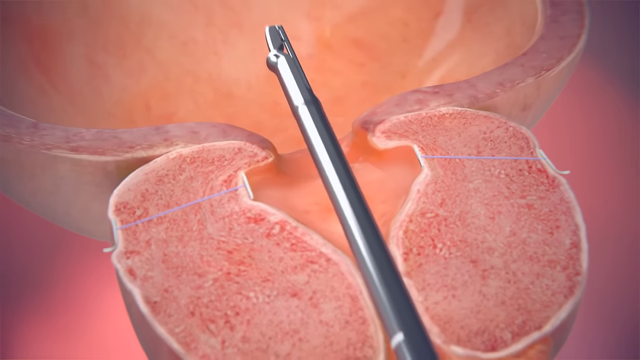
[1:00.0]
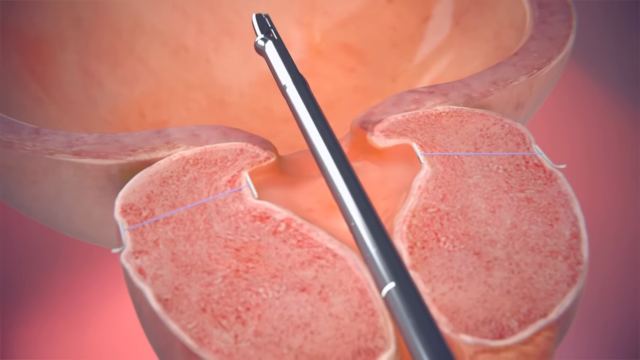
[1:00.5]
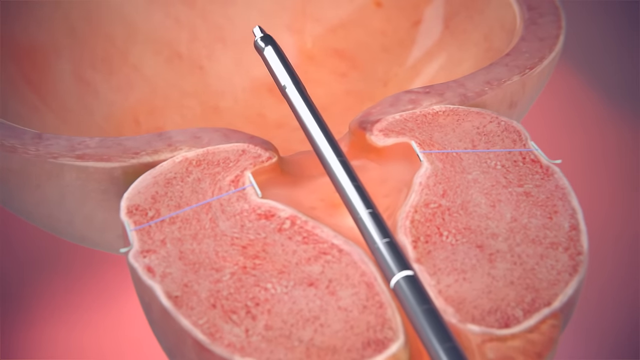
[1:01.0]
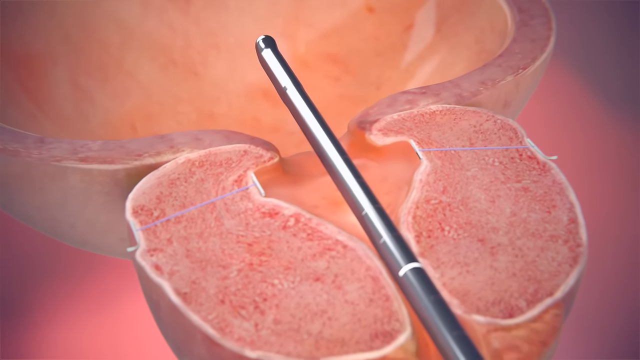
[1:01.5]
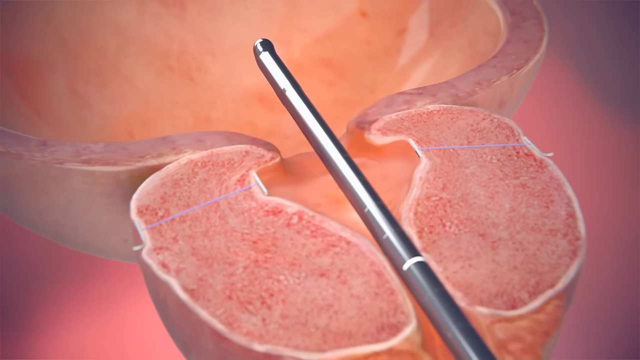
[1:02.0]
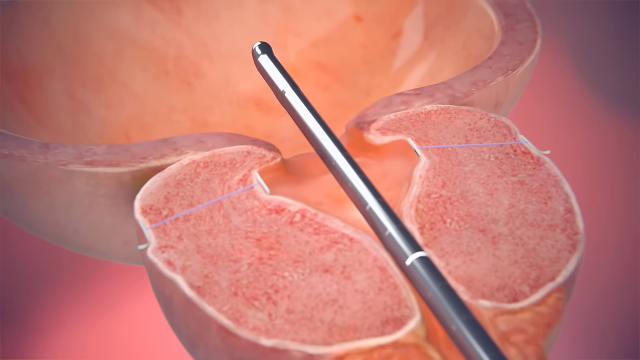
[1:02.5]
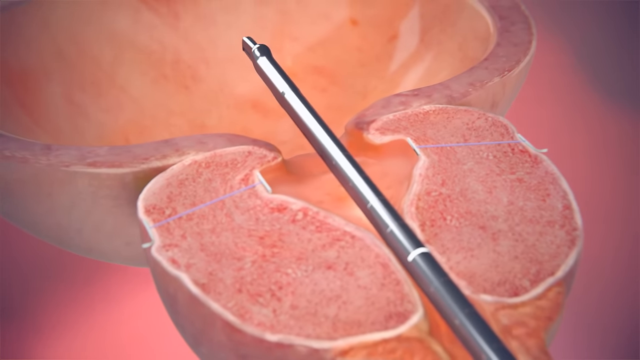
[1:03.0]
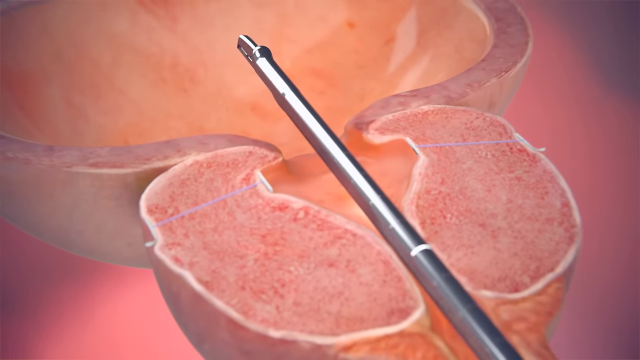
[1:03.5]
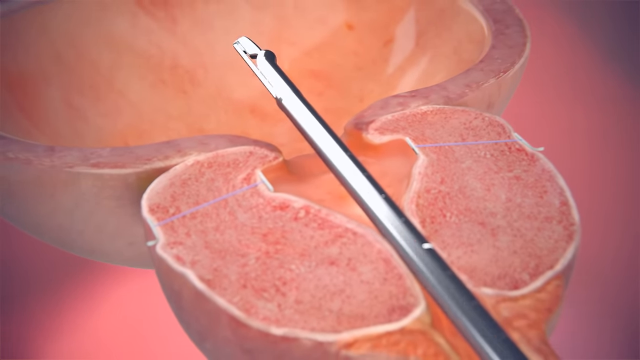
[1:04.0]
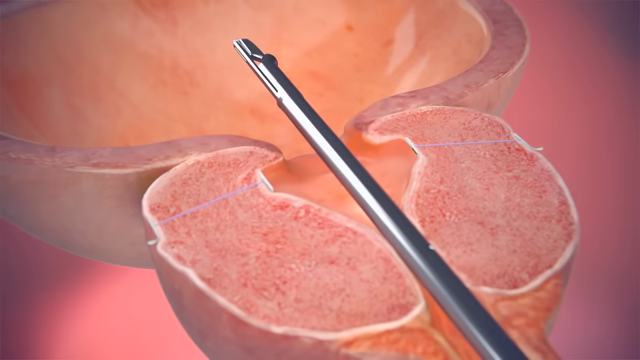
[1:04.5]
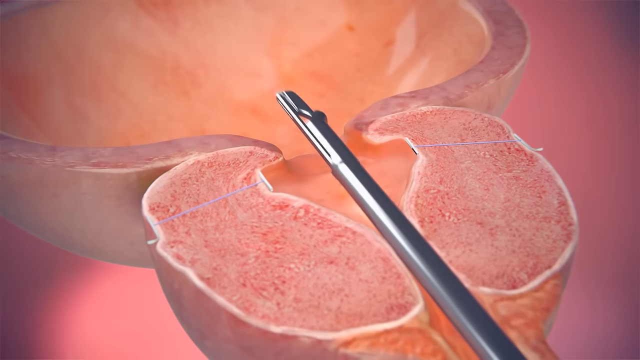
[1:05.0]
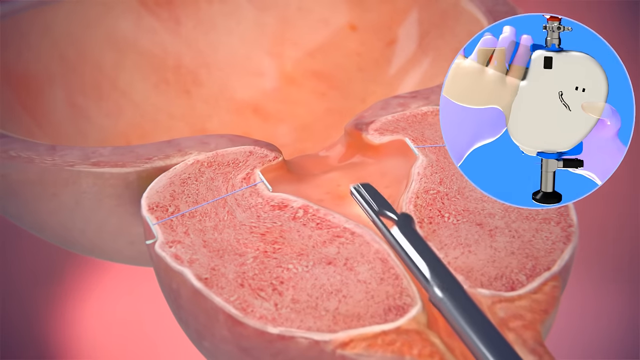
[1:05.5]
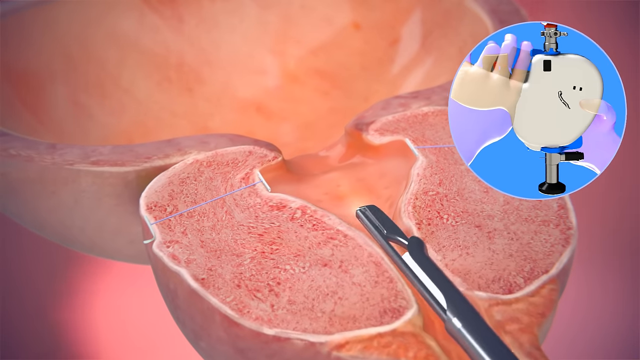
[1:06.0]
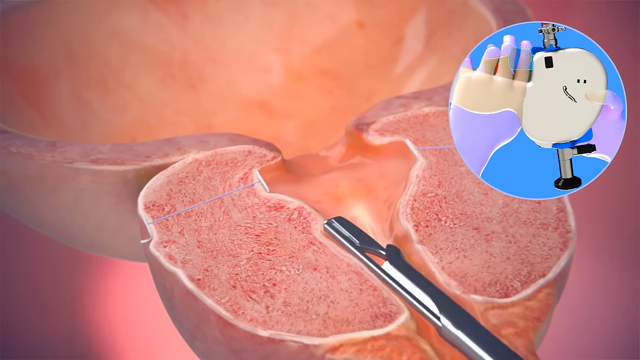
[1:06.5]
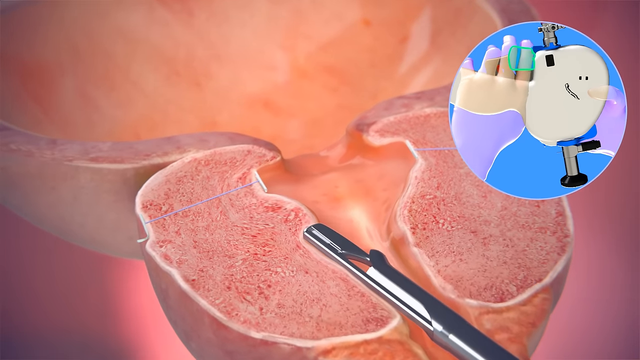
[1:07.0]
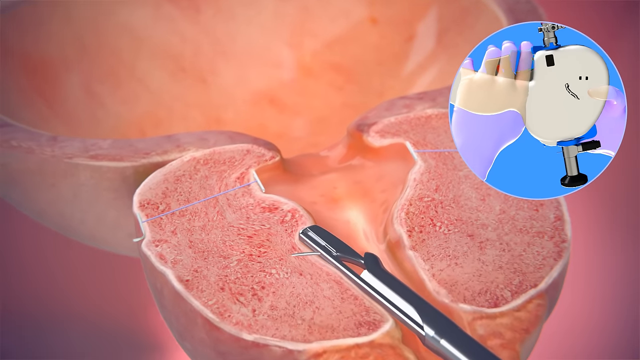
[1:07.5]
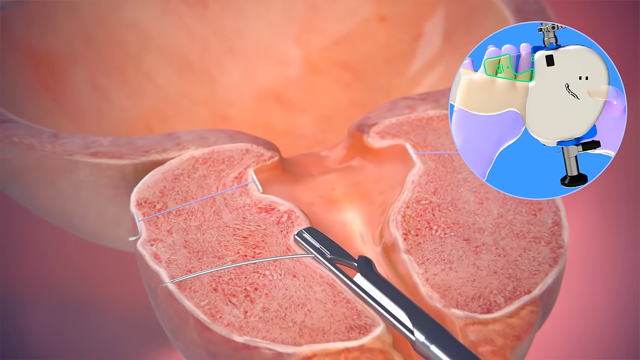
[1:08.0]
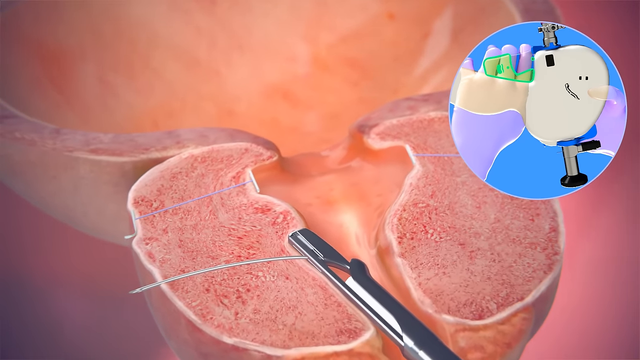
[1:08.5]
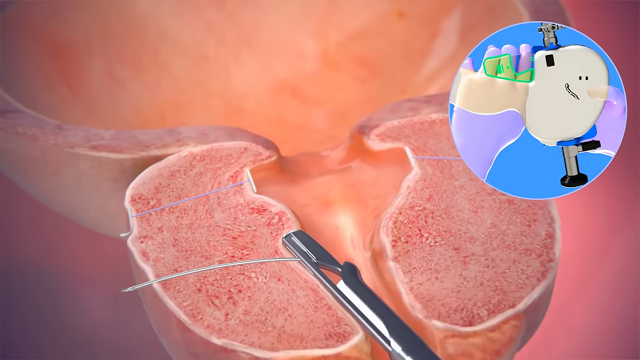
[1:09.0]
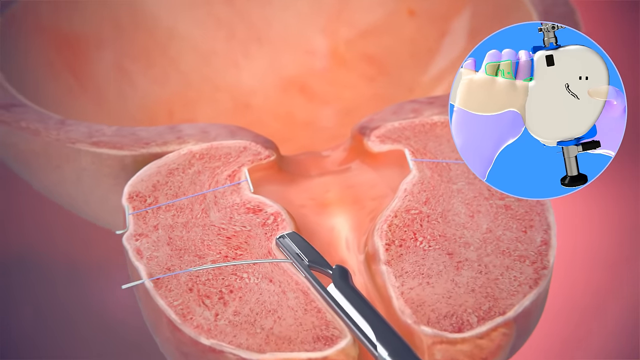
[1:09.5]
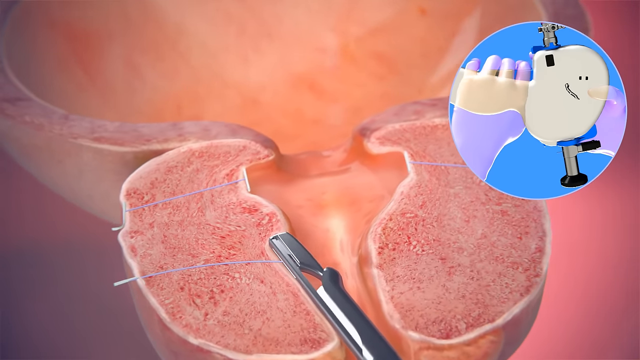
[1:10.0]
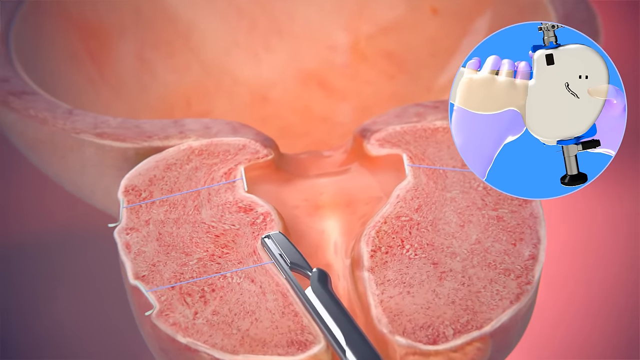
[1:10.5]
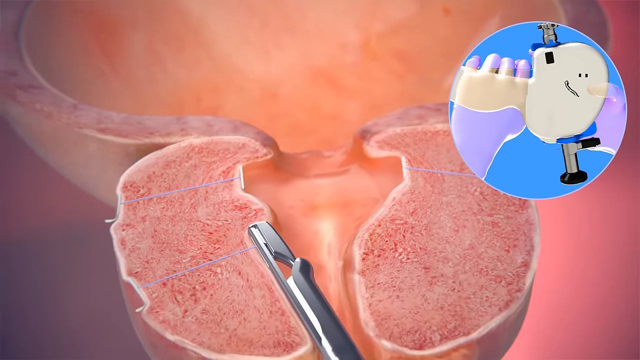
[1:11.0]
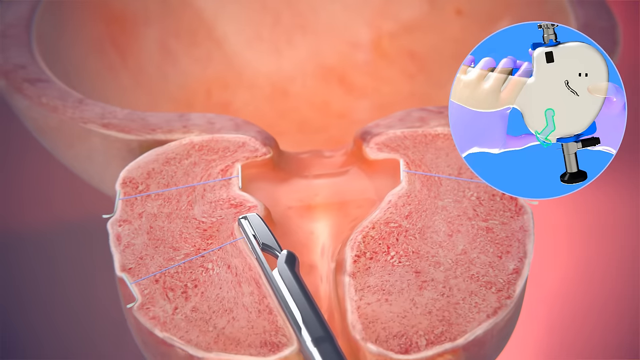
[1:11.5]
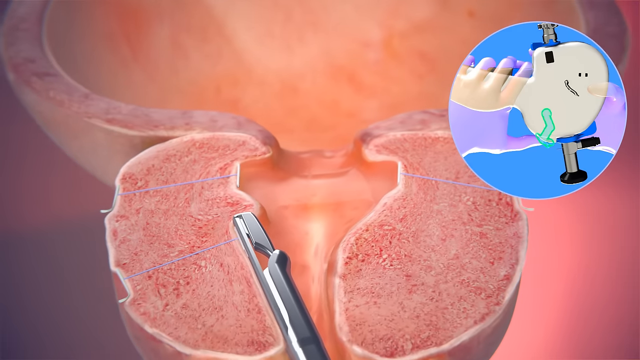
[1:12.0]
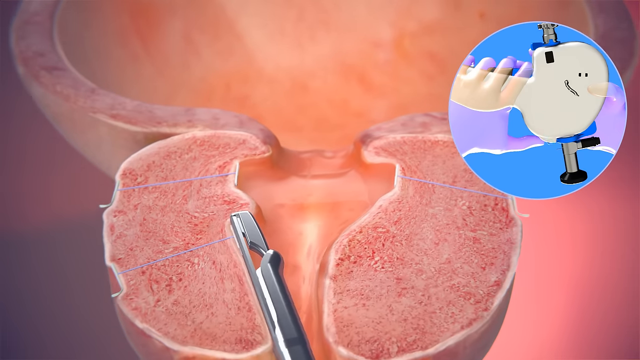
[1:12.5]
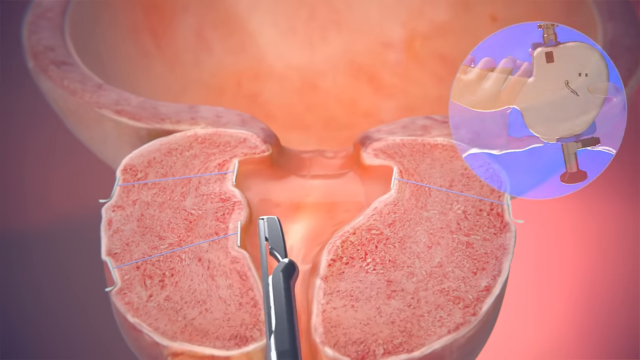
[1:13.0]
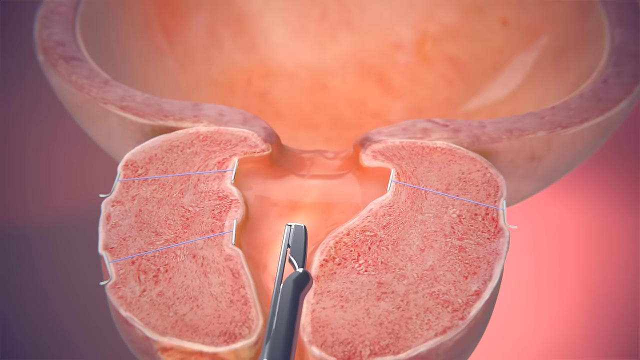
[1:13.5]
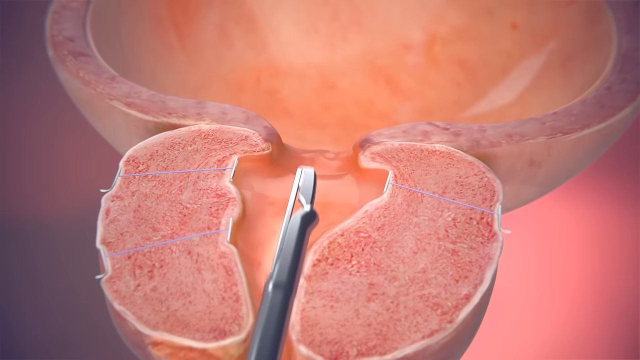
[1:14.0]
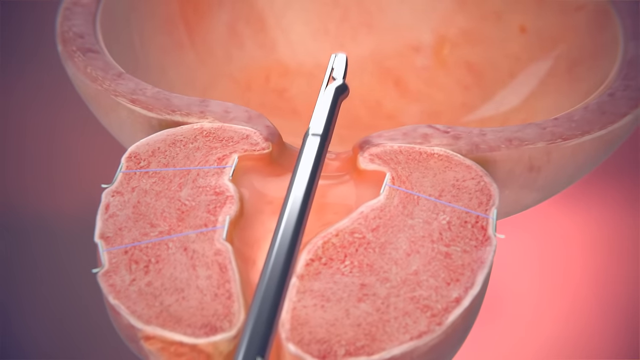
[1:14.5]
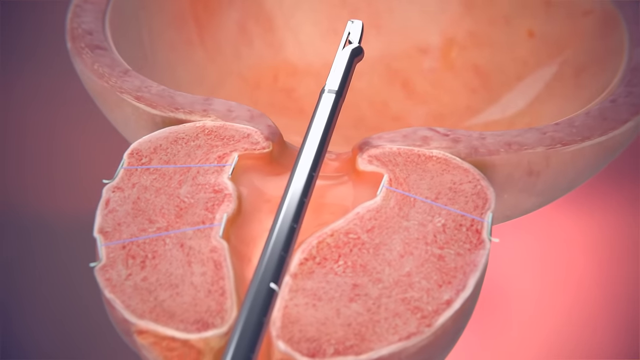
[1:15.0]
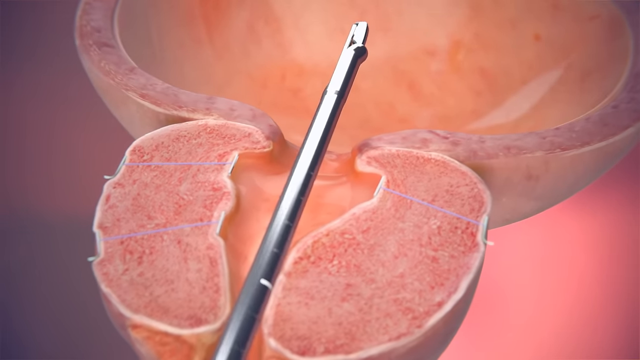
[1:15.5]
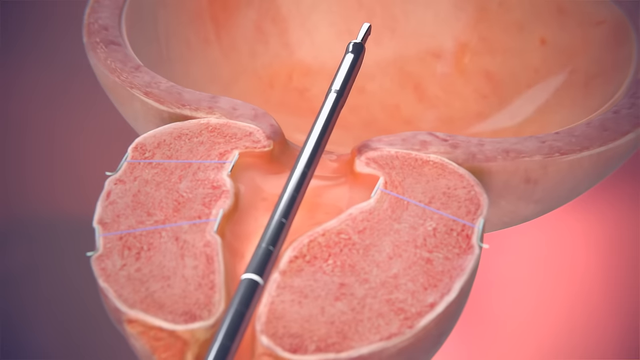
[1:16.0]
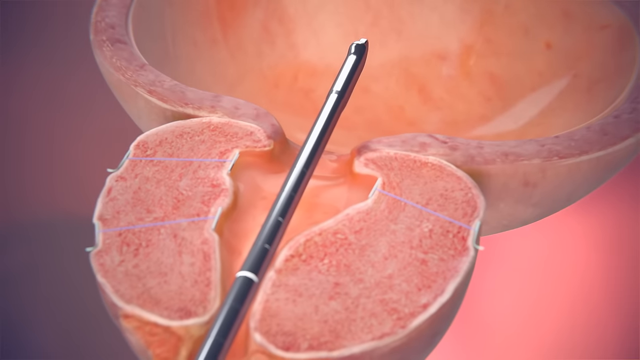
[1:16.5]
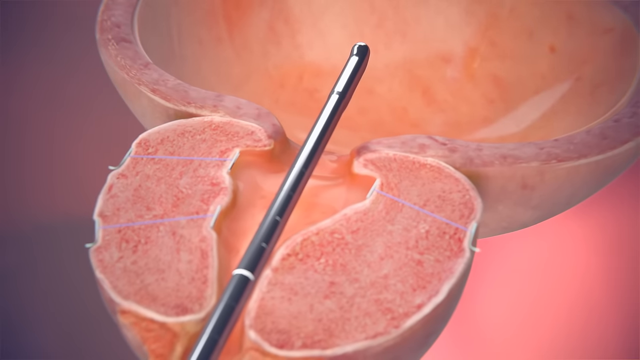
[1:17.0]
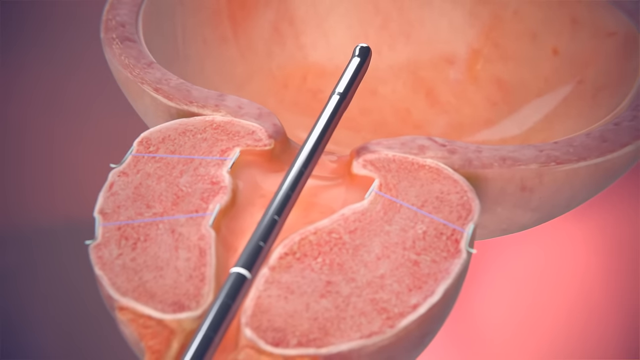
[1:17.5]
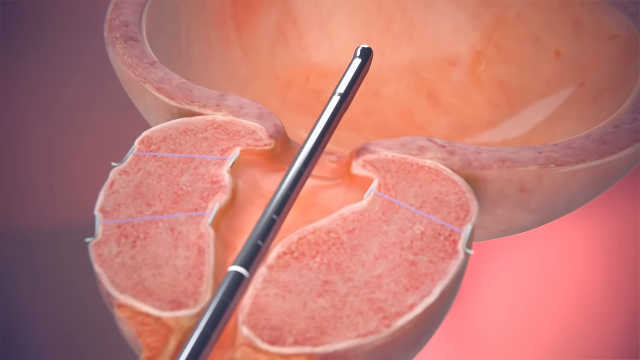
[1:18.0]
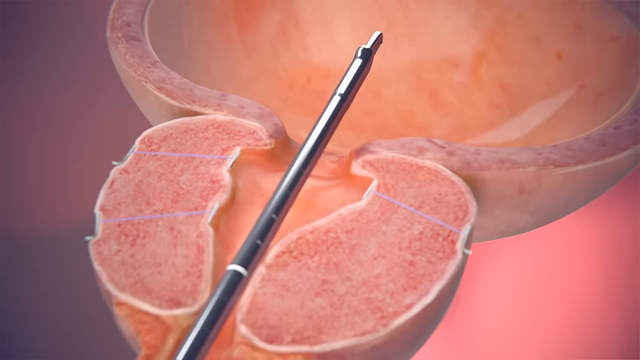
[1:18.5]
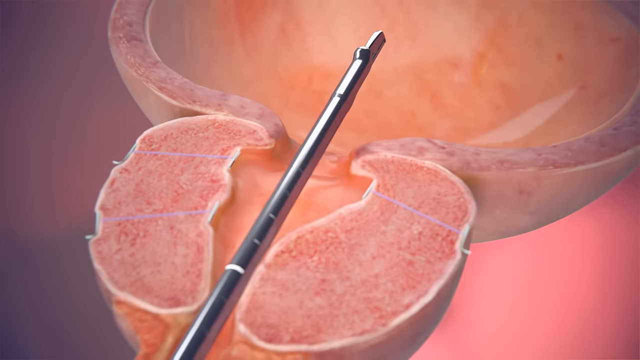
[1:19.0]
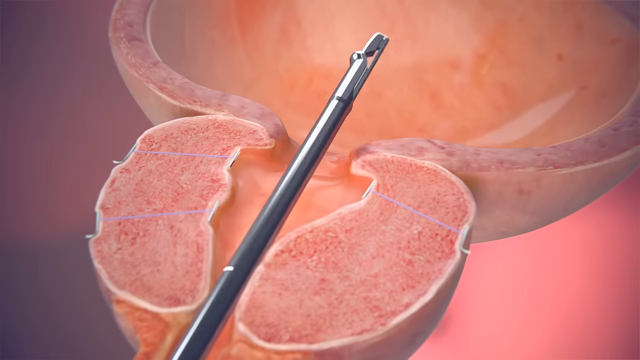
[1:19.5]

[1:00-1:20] An animated demonstration shows a human male's prostate gland with a medical device performing a procedure. The sliced-open prostate reveals the details of the procedure. The device looks like a slim metal rod and has been pushed through the opening of the urethra into the bladder region. The metal is rotated, pulled slightly outwards and pushed to the left to widen the opening. A pop-up in the upper right corner of the screen shows, in a circular frame, a pair of purple-gloved hands operating the device. A white curved arrow illustrates that the device is being pushed to the left side. The camera pans and views the urethra from a different angle, rotating it slightly clockwise. The device is then inserted further in again and rotated to the right side.